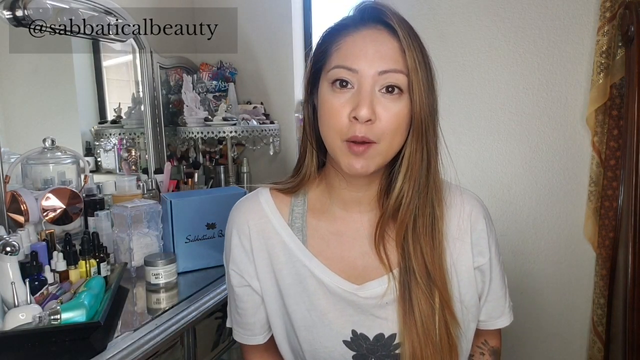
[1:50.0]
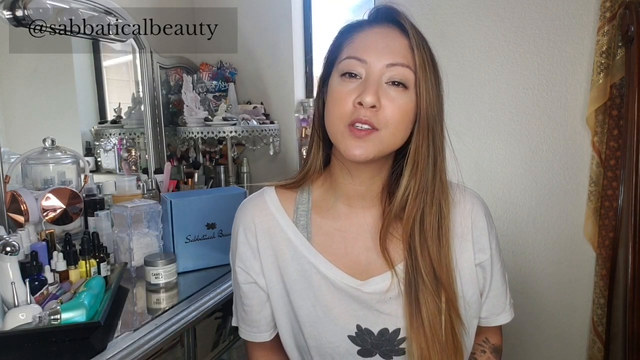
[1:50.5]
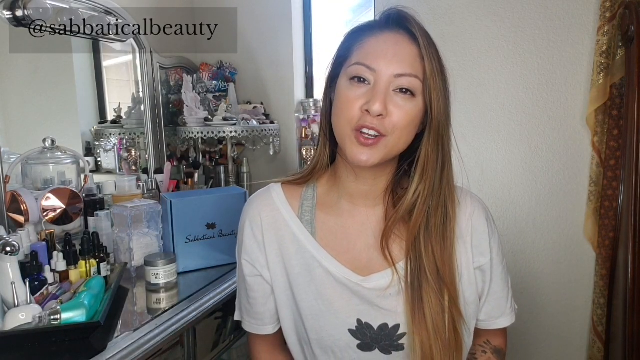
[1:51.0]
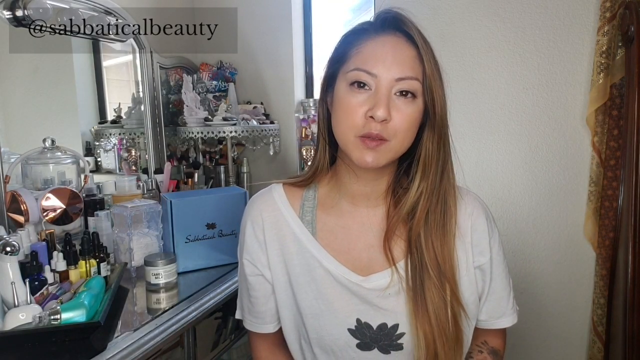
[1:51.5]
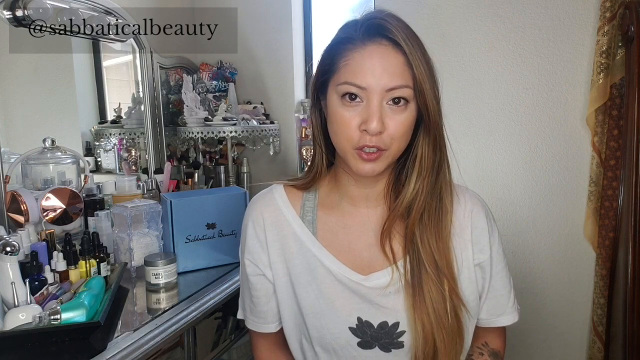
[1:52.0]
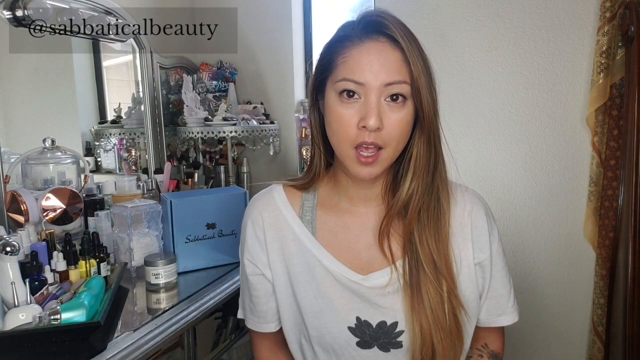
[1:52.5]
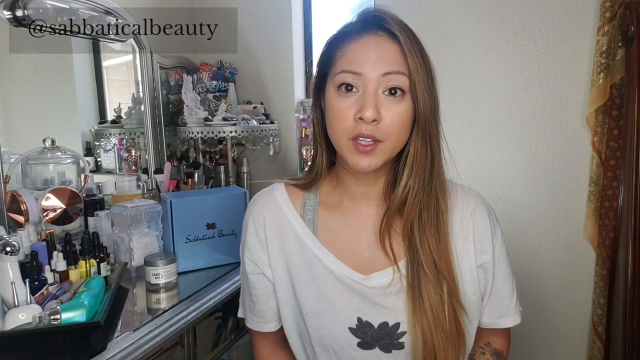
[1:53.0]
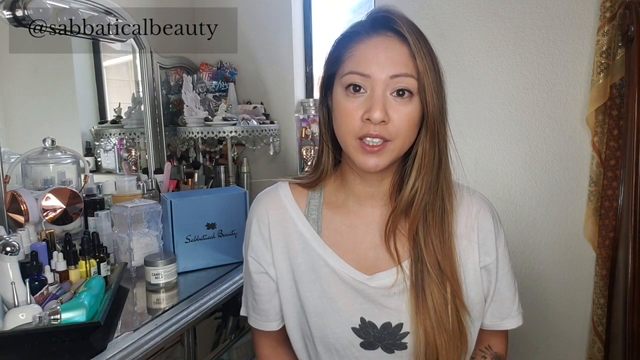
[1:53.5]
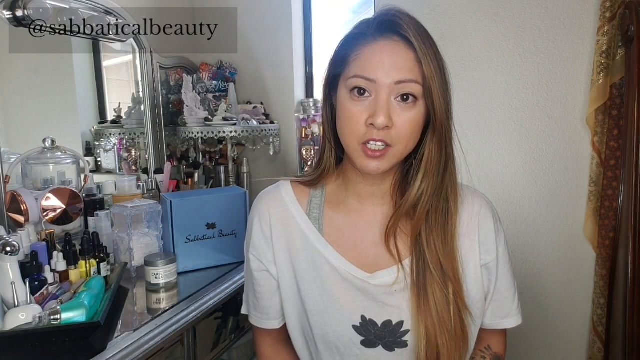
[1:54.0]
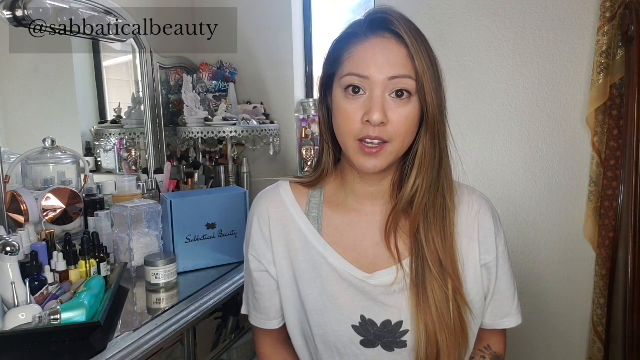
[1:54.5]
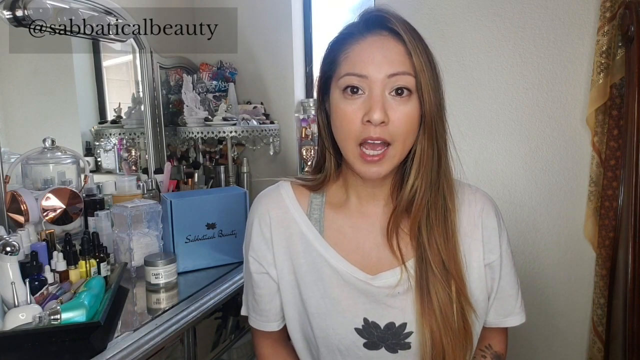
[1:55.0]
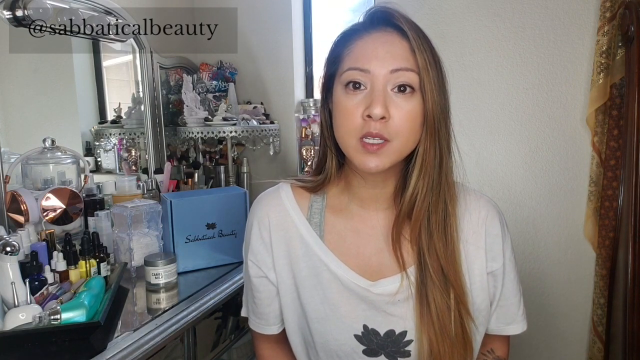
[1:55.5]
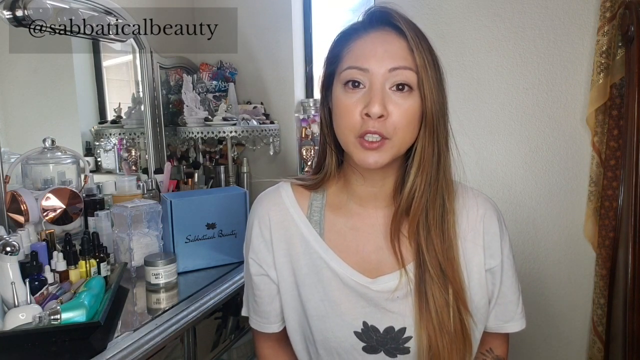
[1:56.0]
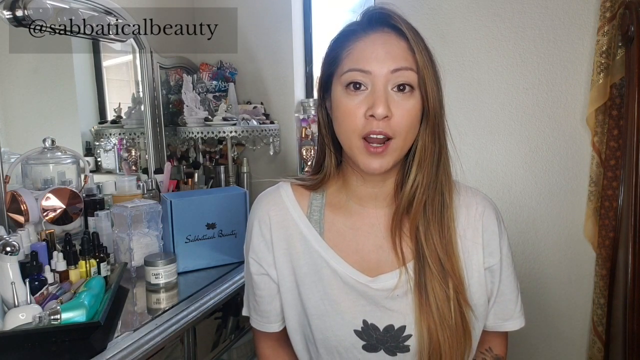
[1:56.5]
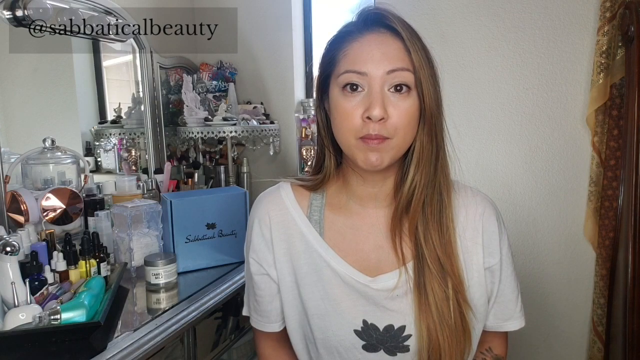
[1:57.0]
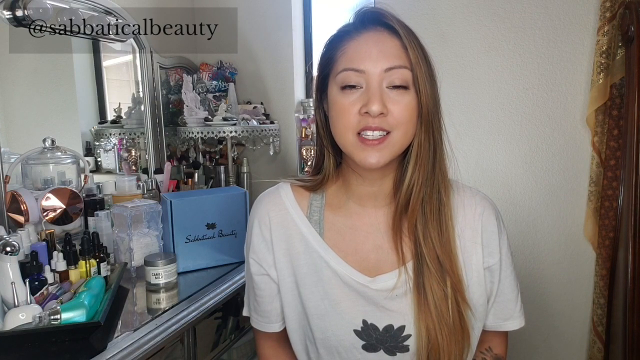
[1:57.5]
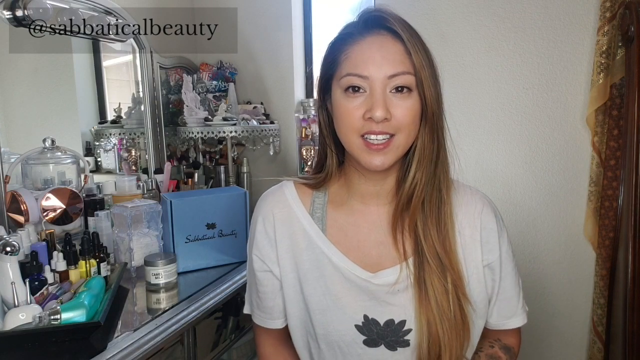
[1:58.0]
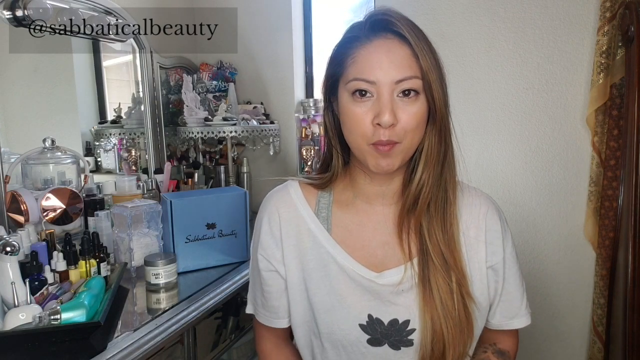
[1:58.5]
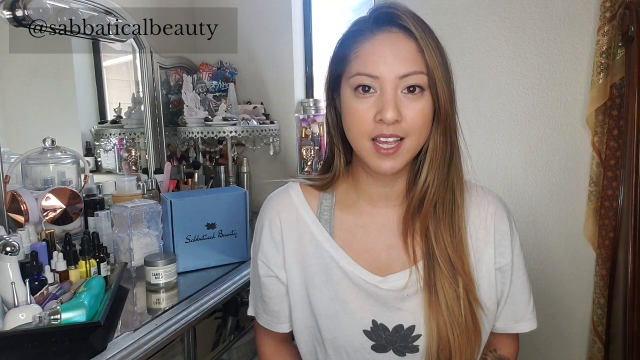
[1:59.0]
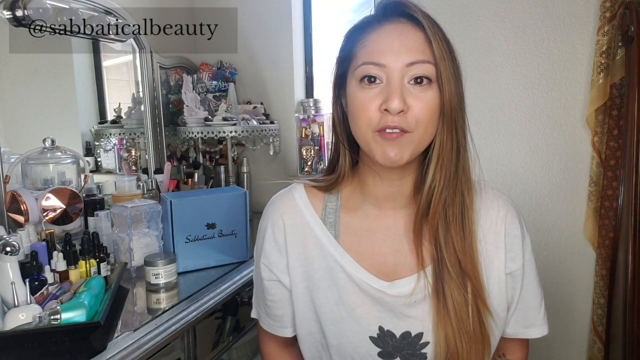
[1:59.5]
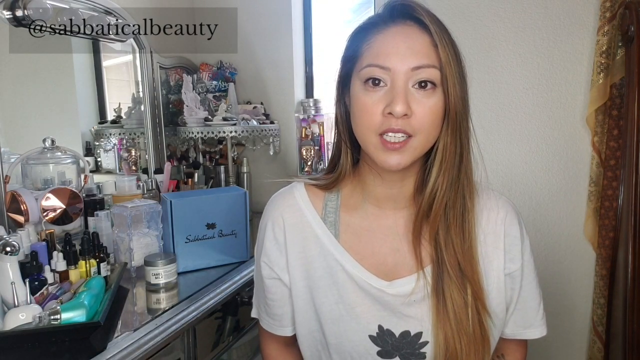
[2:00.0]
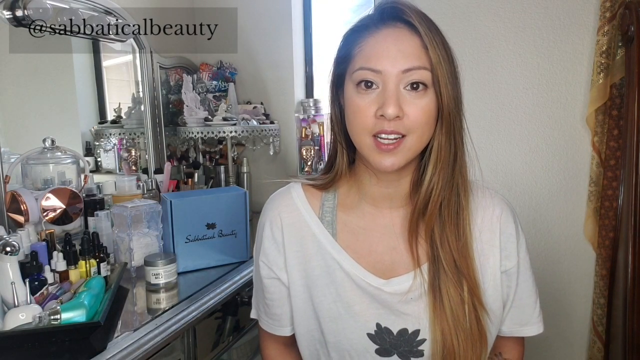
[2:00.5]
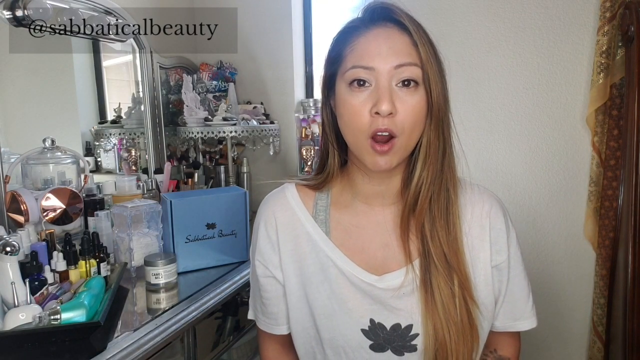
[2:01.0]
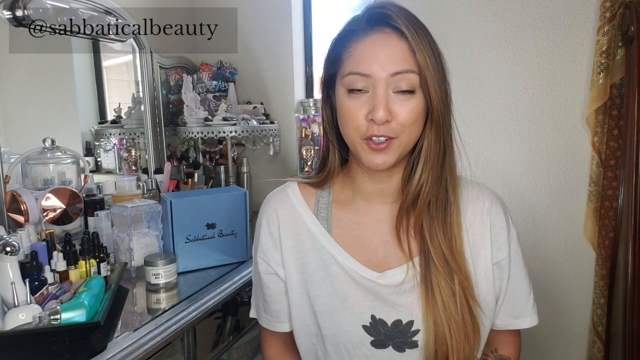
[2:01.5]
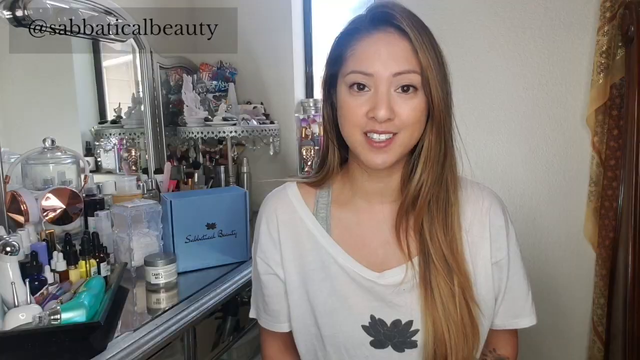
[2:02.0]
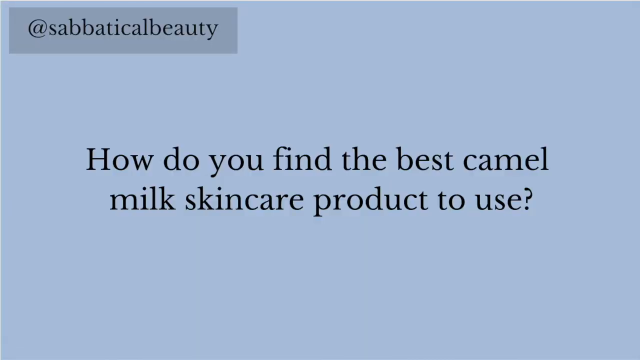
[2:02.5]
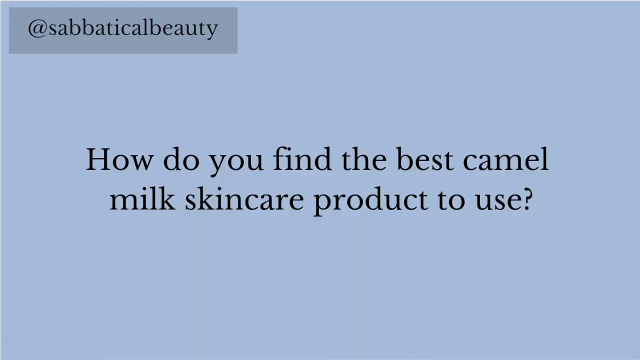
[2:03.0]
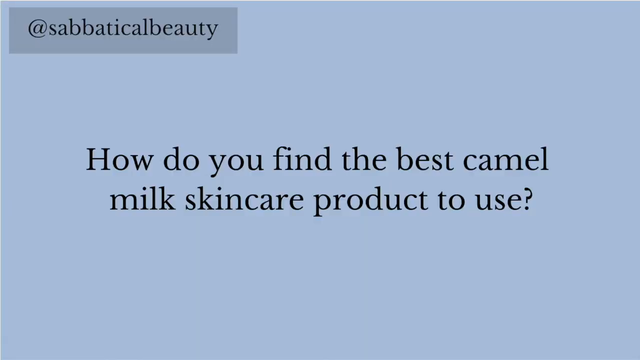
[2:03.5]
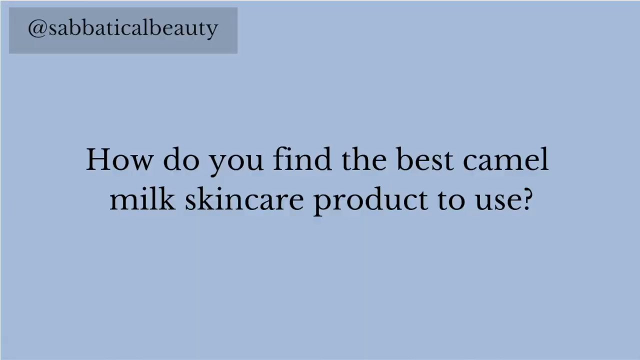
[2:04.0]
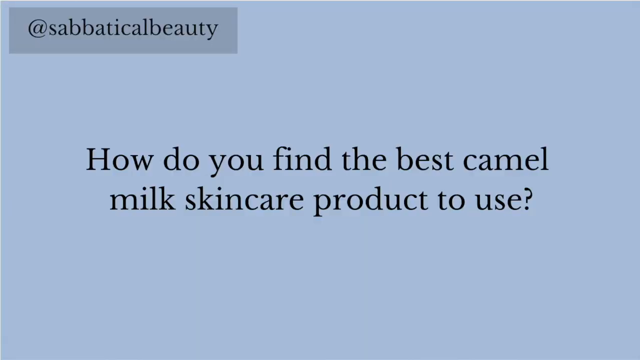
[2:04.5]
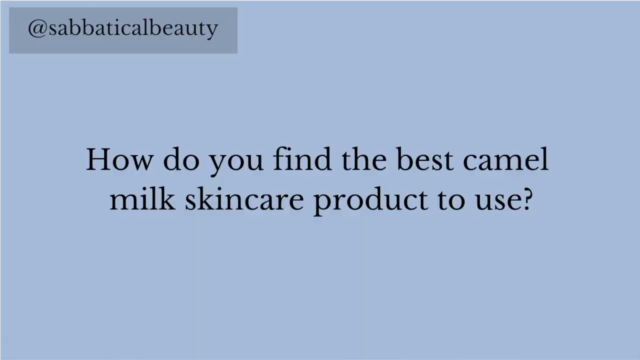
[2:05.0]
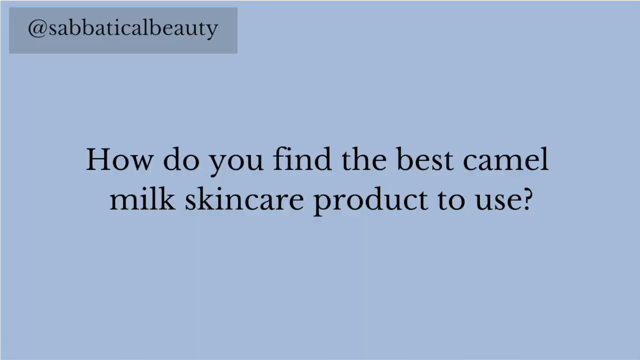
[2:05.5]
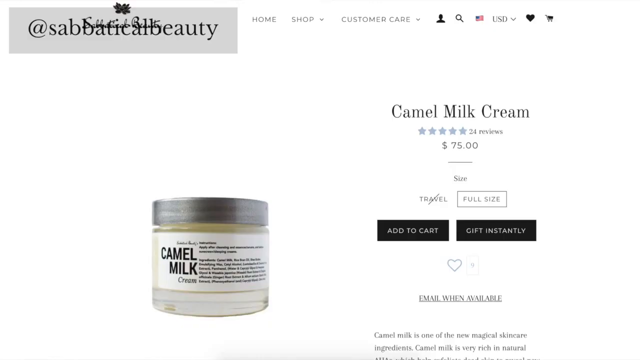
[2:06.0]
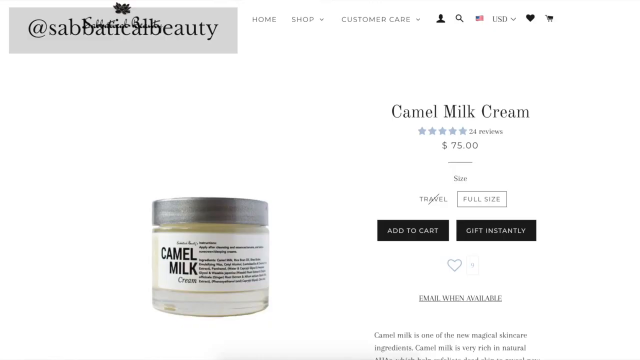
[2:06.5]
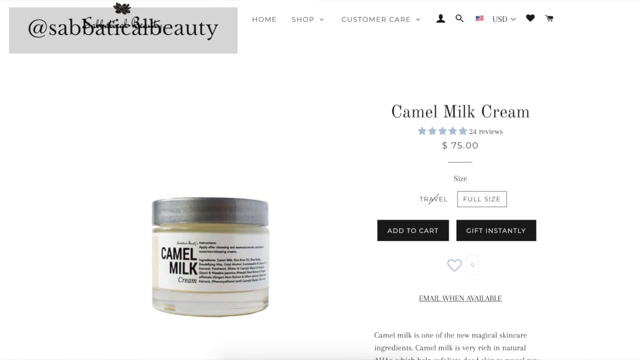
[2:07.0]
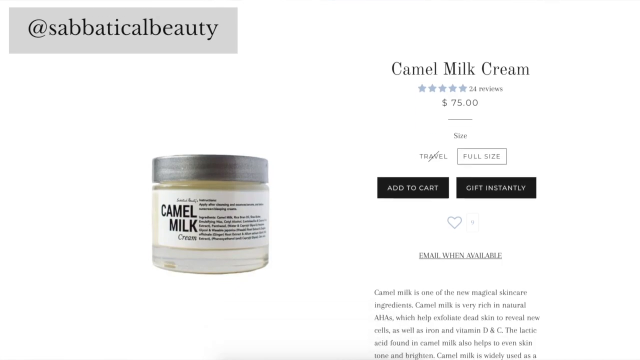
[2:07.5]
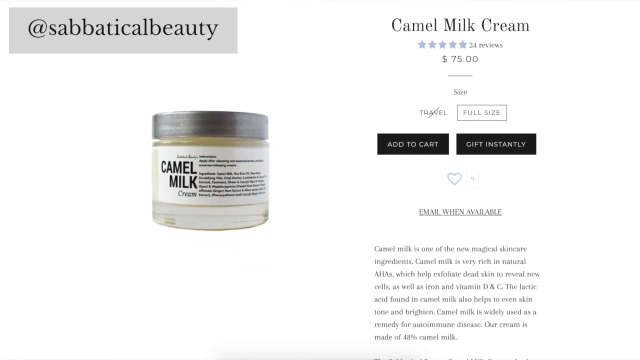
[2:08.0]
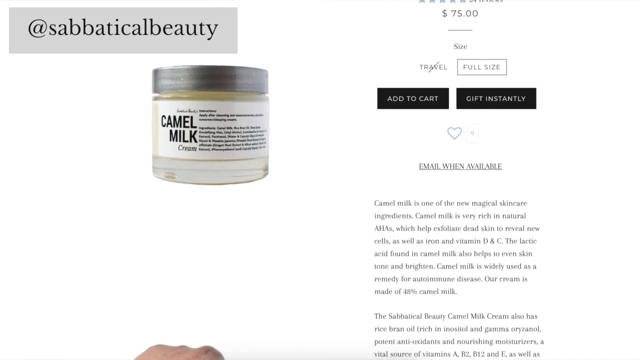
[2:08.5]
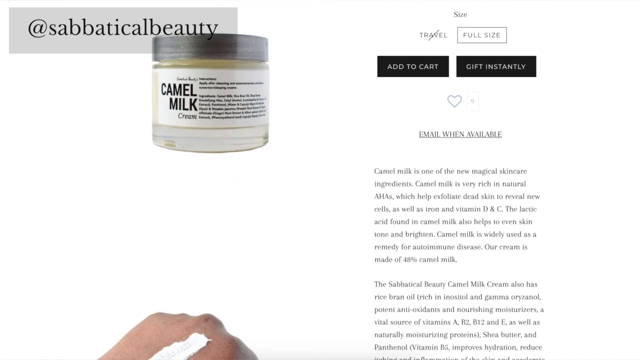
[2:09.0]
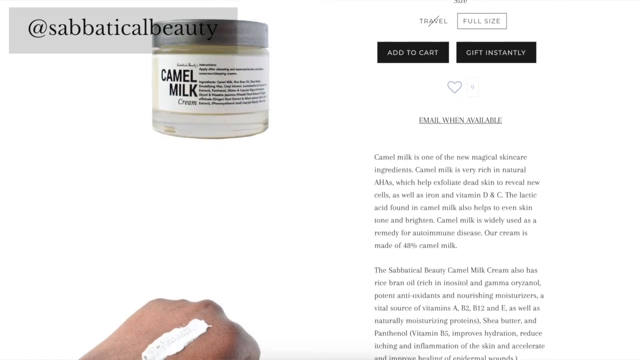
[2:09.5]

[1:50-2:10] Another question appears: "how do you find the best camel milk skincare product to use?" The woman shows the website with the different camel milk products.